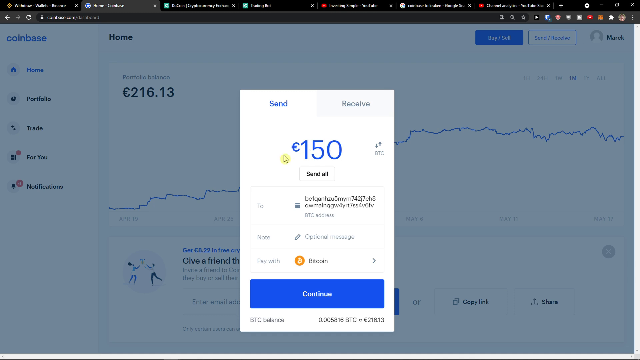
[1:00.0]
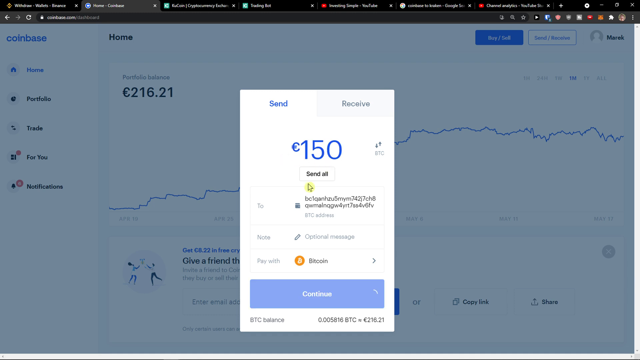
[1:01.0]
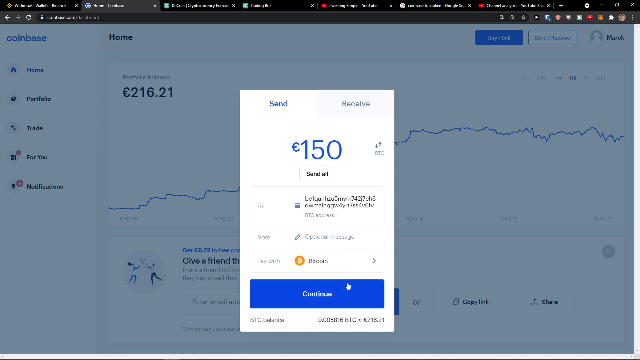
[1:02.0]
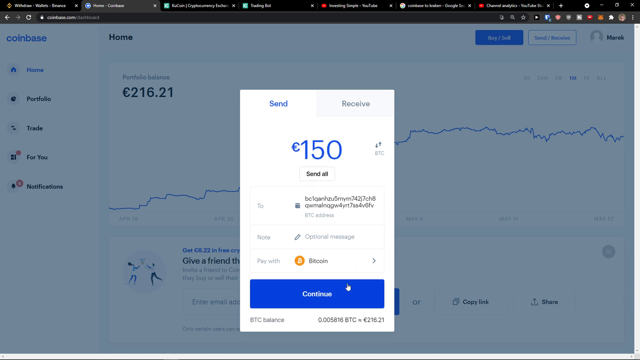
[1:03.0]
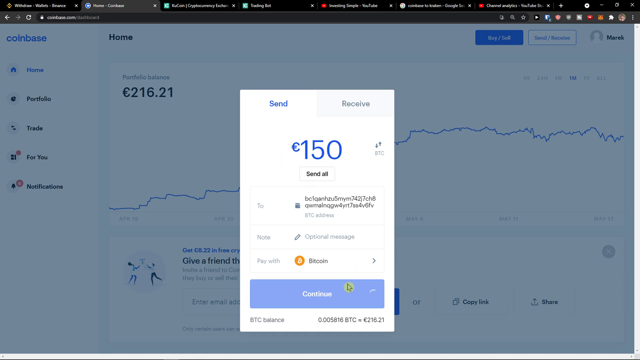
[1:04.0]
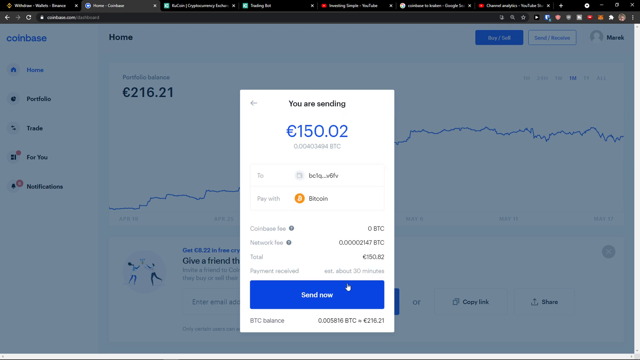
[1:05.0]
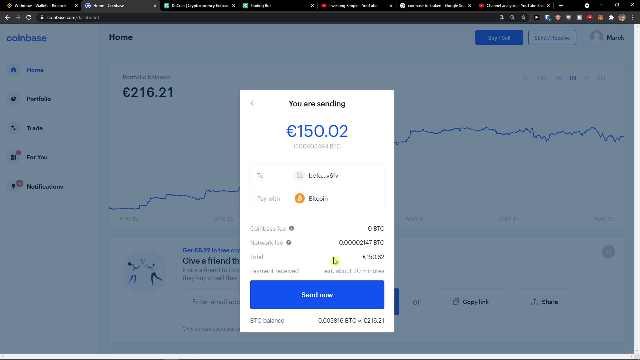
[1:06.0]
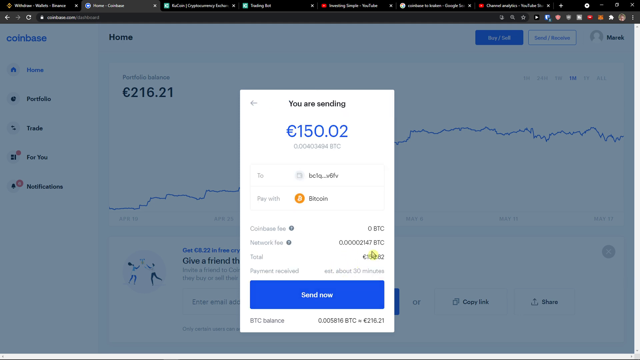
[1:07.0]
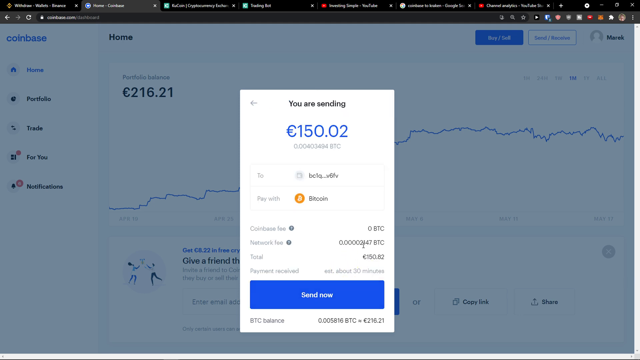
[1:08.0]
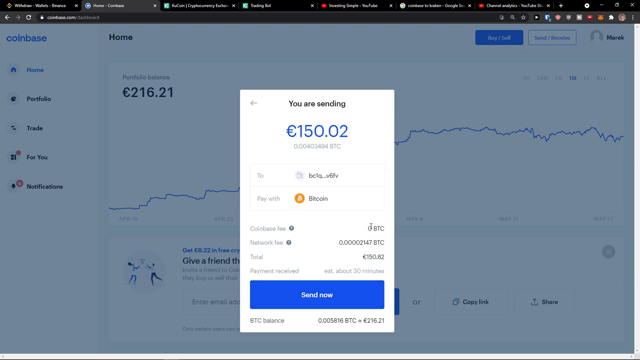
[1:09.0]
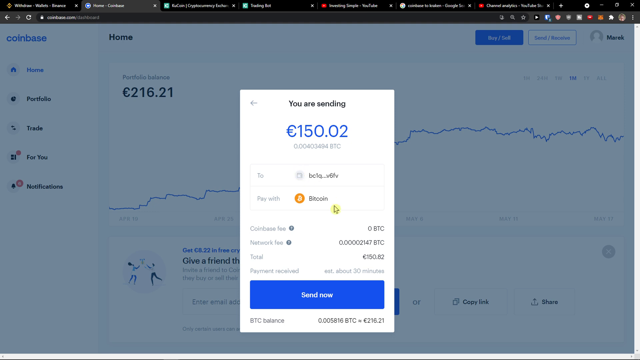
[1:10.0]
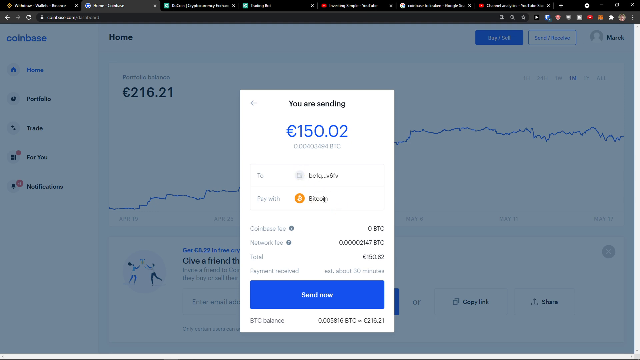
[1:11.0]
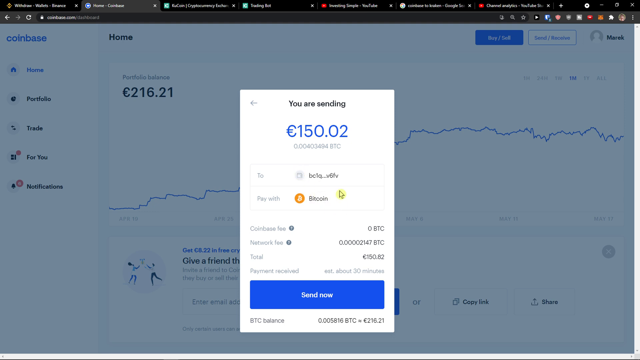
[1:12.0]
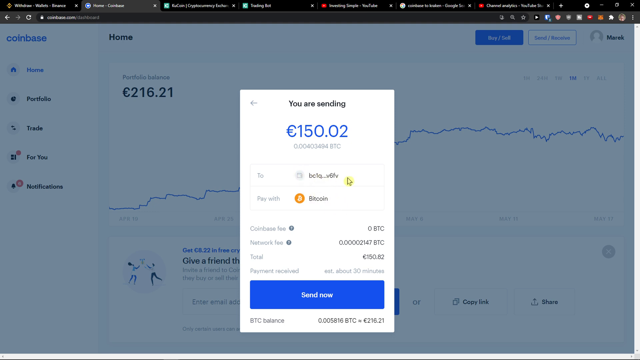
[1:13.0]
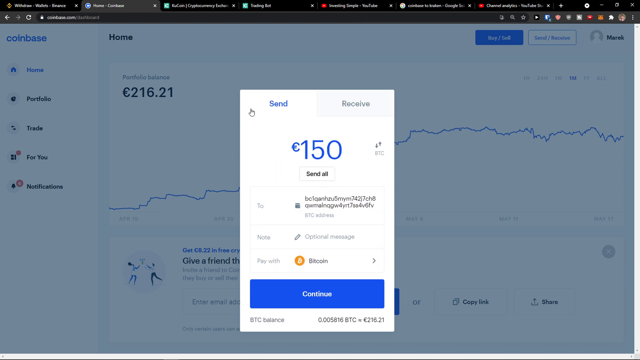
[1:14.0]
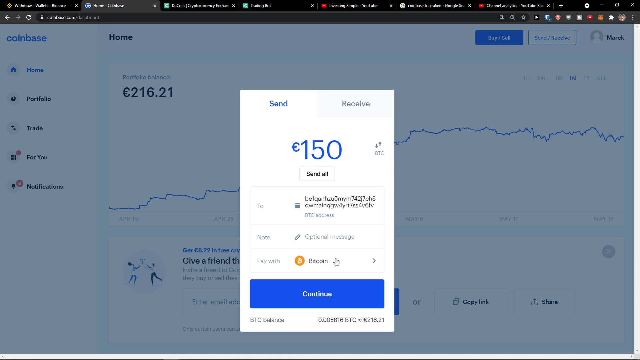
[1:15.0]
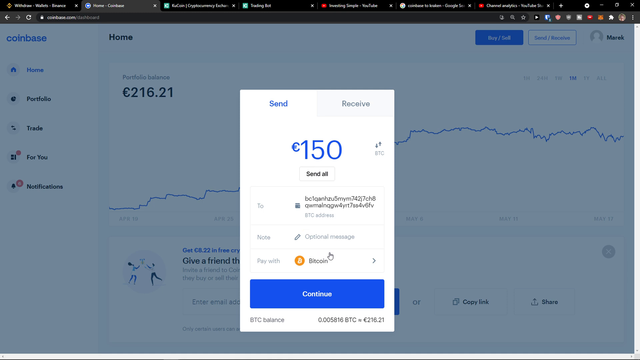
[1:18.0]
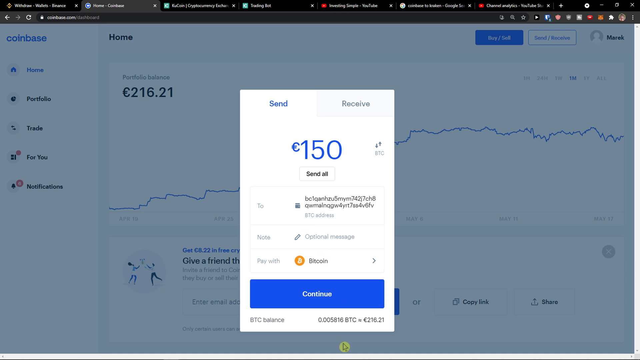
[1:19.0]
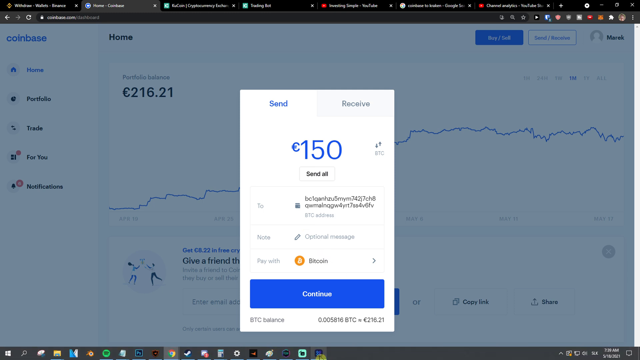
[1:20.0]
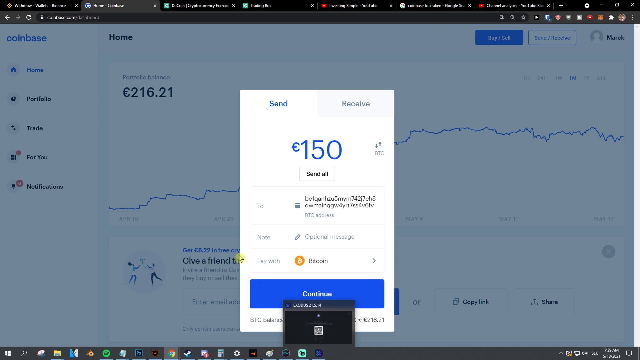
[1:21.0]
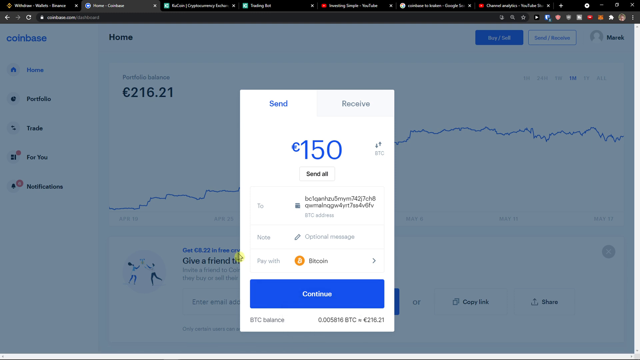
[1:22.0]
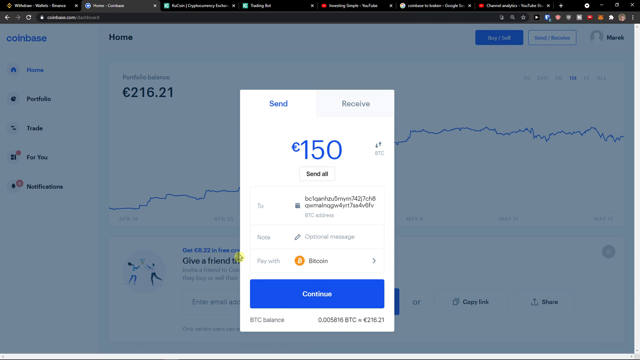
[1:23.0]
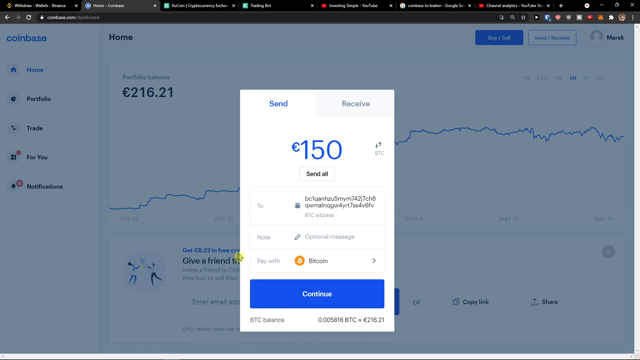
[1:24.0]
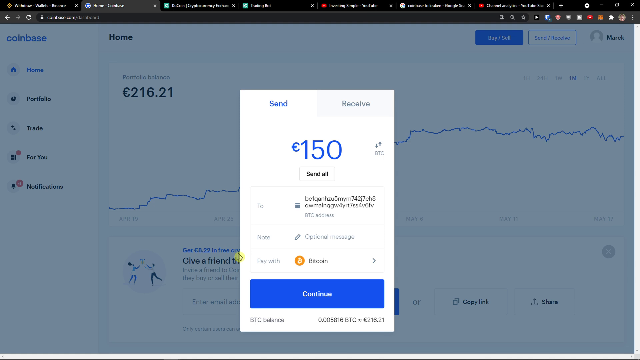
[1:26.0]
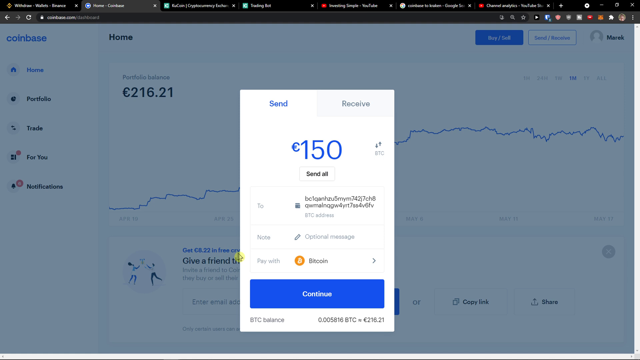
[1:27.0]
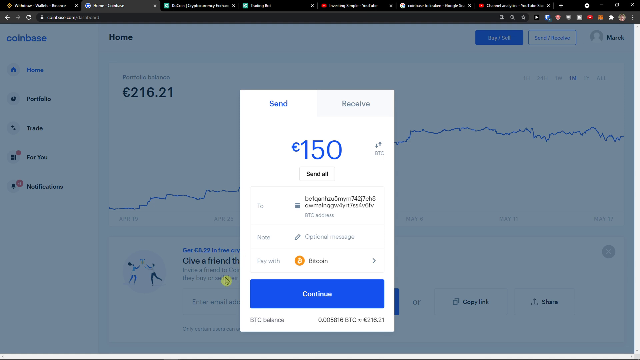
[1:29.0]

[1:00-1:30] A screen recording of a website shows the main site grayed out with a bluish tint. "Coinbase" is in the upper left, then "Home", with a balance apparently of two hundred and sixteen dollars and twenty-one cents, though it may be European money, with what looks like a funny little e. A small window in the middle allows sending or receiving; "Send" is blue and "Receive" is grayed out, the amount is 150, and something is pasted into the "To" field. The mouse cursor, a hand, goes over the "Continue" button at the bottom and clicks it; the cursor changes from a hand to a yellow arrow, and a small spinning icon to its right shows something loading. The window then pops back up saying "you are sending 150.02". Information below that is hard to make out. The yellow cursor moves around the page, back and across different numbers to emphasize them, then up to circle the word "Bitcoin", and across whatever is above "Bitcoin". The cursor then goes to a back arrow in the upper left-hand corner and clicks it, returning to the earlier screen where 150 was being sent.